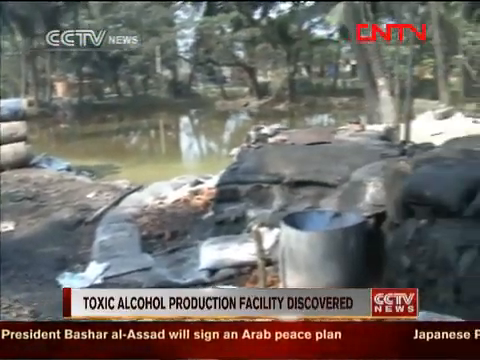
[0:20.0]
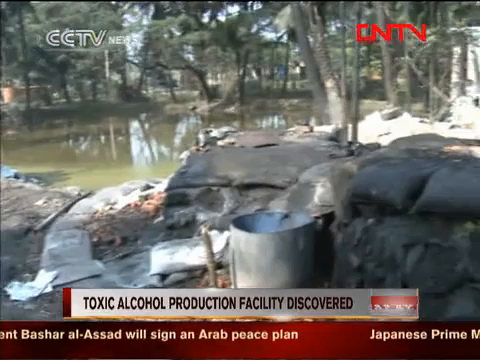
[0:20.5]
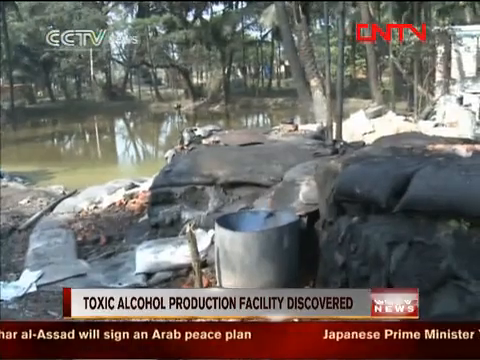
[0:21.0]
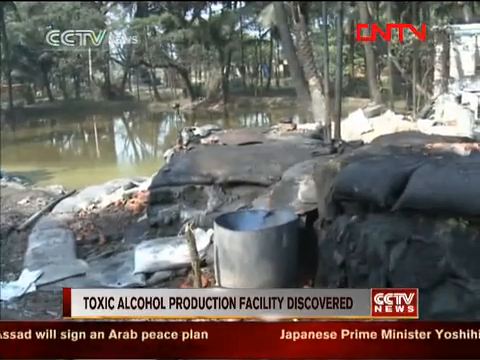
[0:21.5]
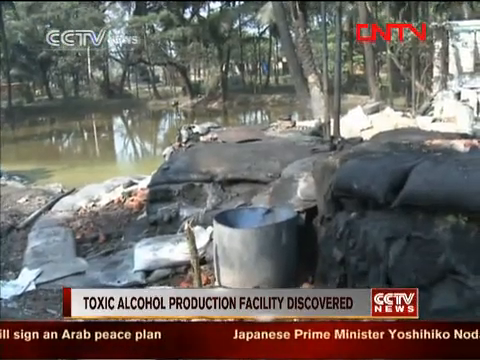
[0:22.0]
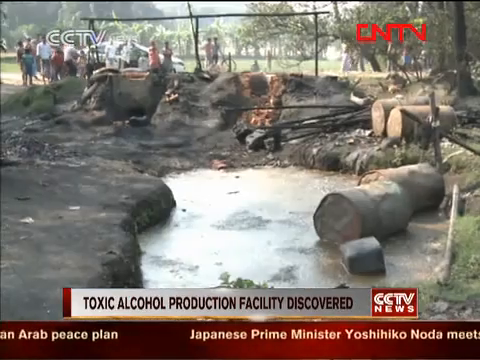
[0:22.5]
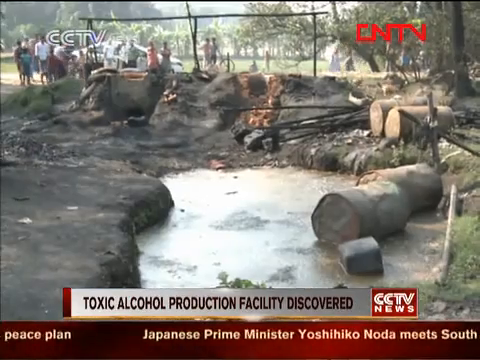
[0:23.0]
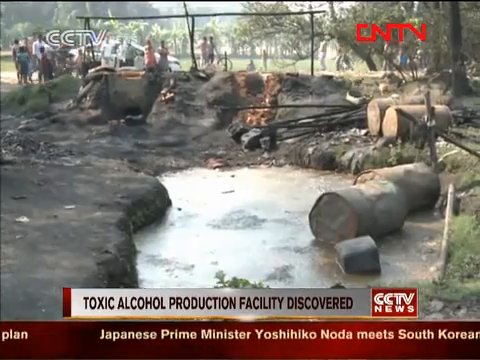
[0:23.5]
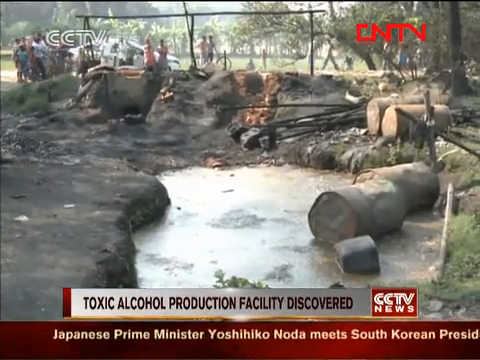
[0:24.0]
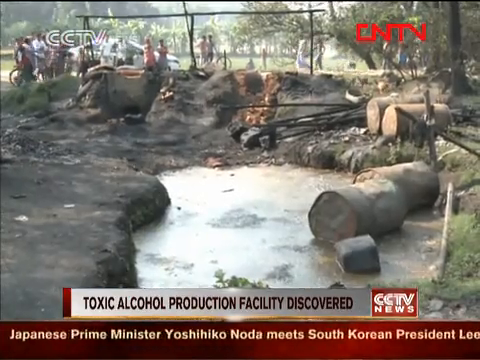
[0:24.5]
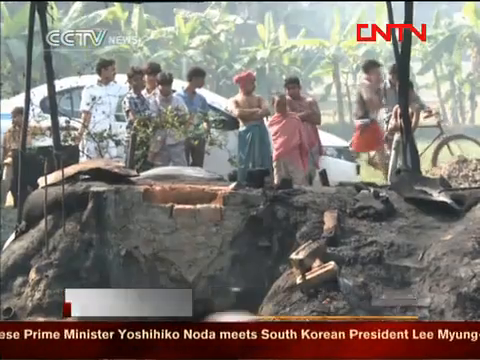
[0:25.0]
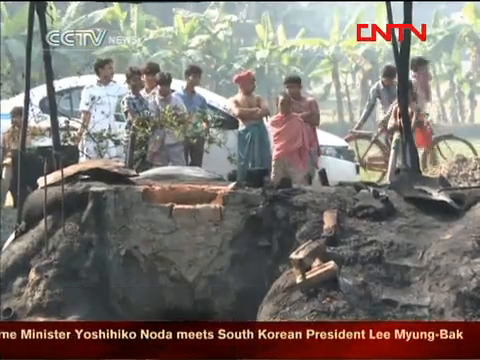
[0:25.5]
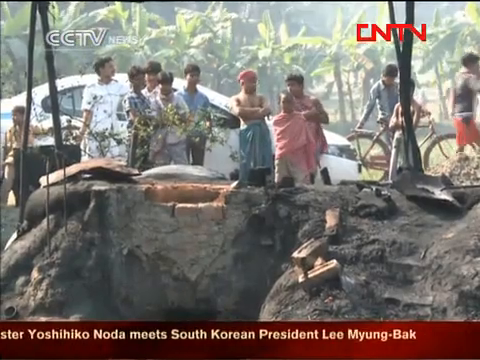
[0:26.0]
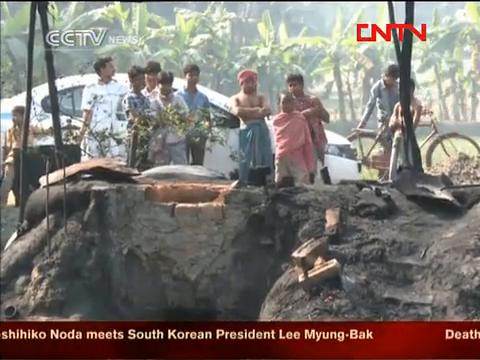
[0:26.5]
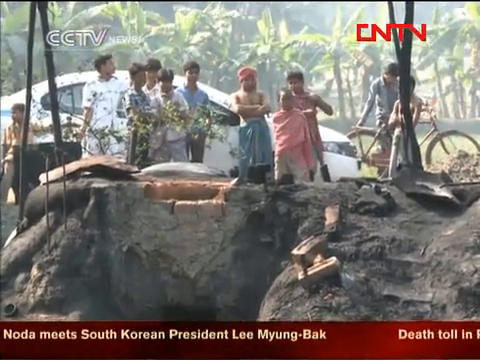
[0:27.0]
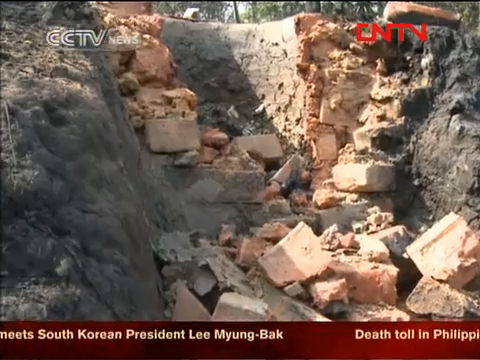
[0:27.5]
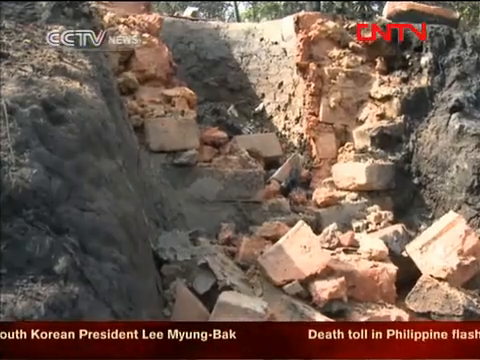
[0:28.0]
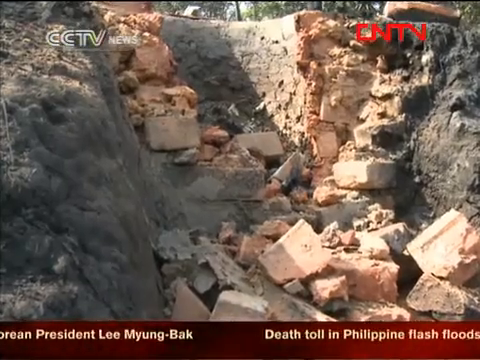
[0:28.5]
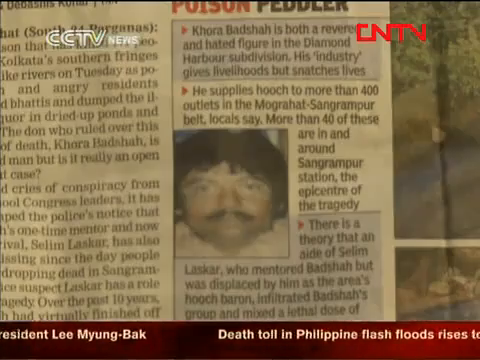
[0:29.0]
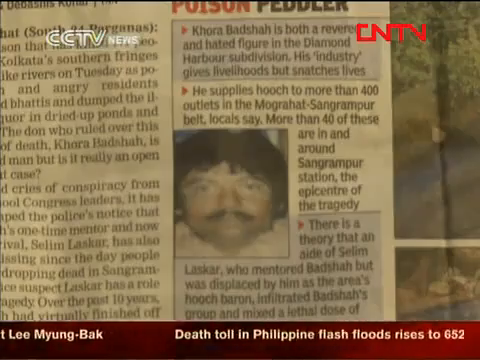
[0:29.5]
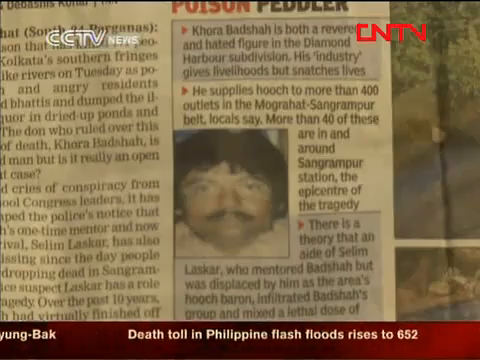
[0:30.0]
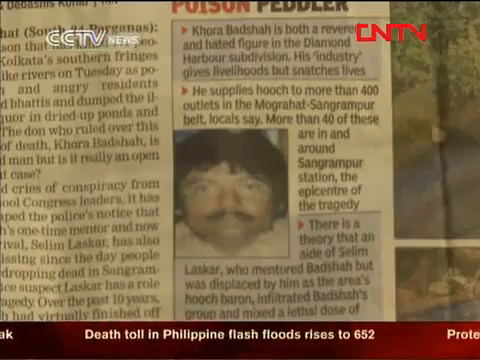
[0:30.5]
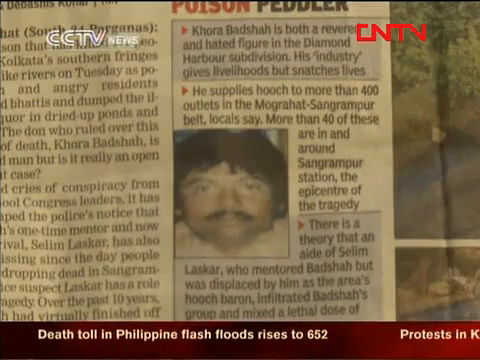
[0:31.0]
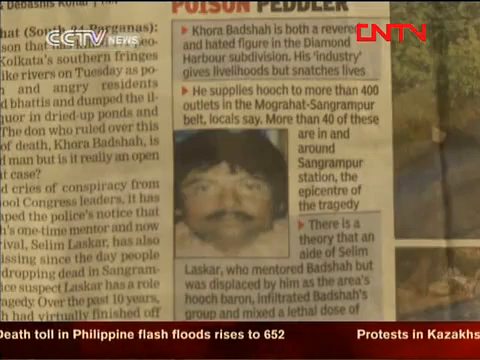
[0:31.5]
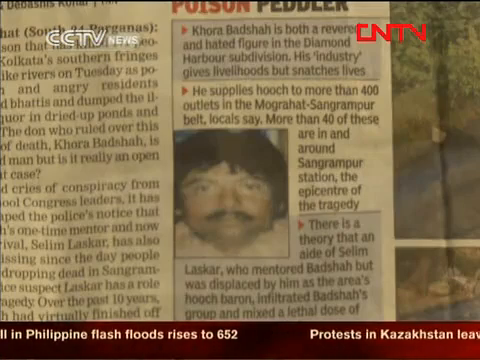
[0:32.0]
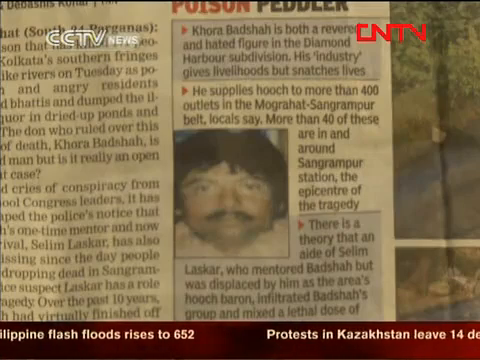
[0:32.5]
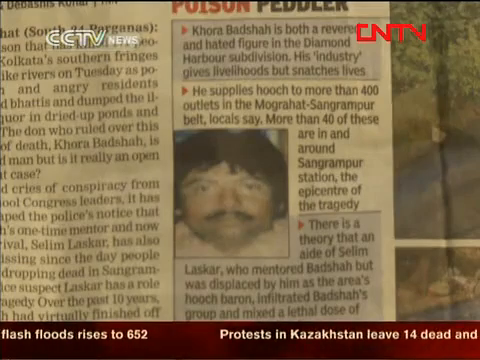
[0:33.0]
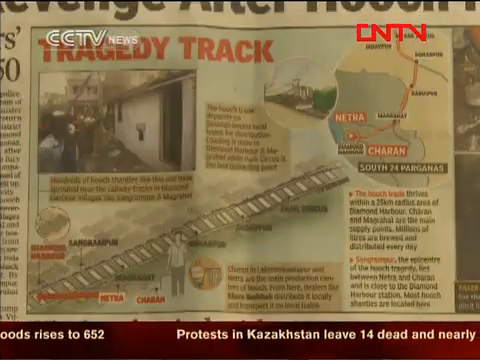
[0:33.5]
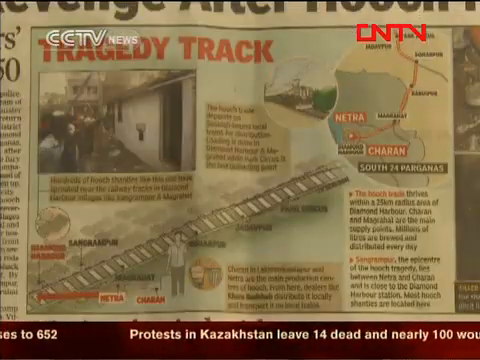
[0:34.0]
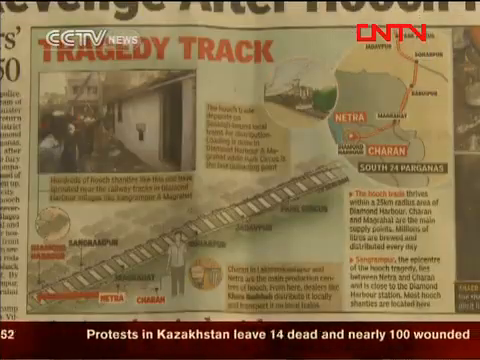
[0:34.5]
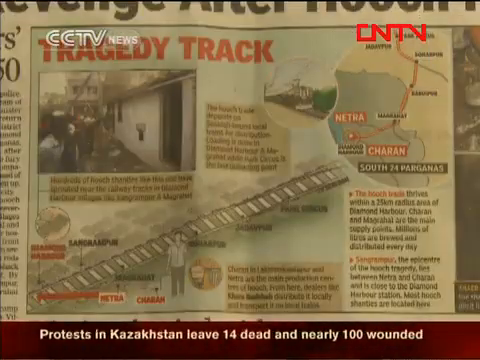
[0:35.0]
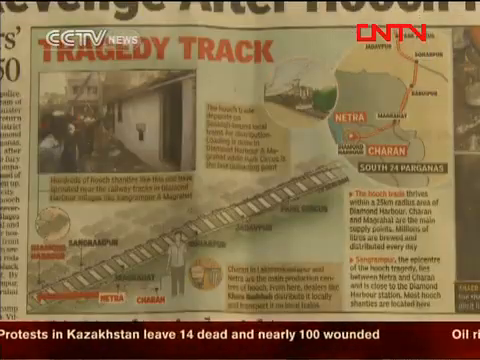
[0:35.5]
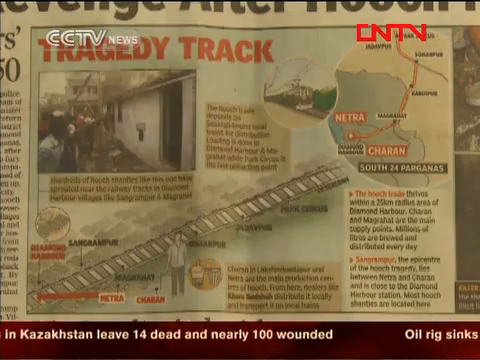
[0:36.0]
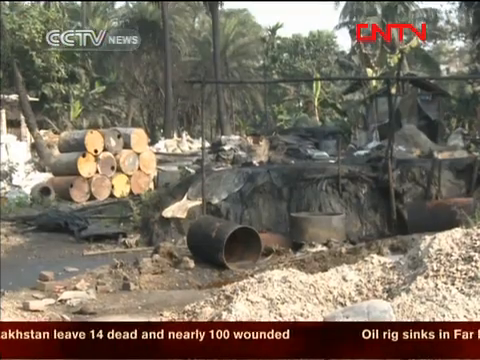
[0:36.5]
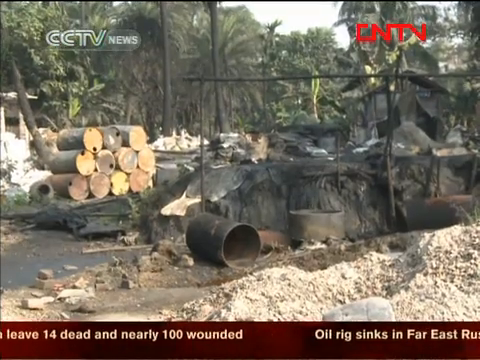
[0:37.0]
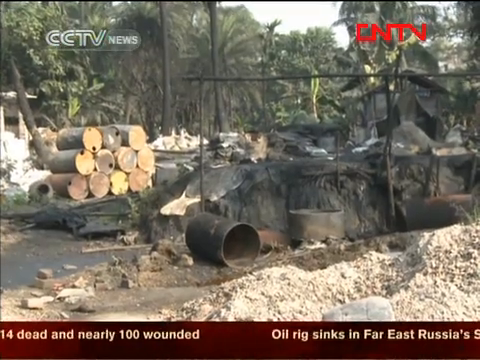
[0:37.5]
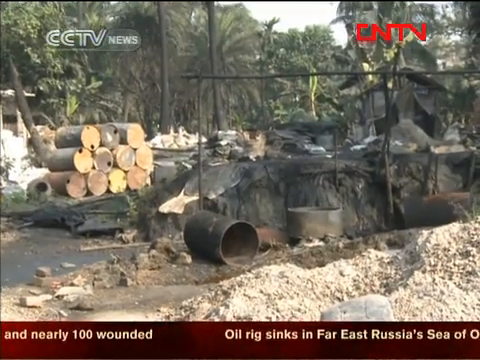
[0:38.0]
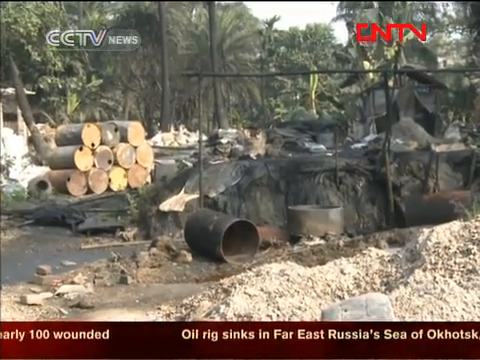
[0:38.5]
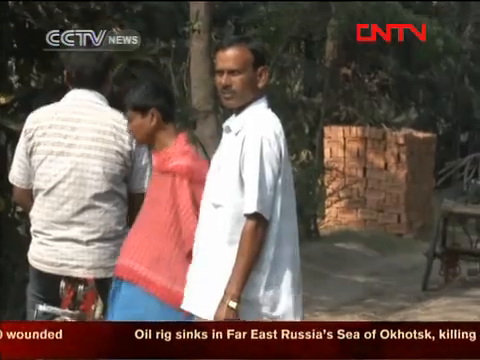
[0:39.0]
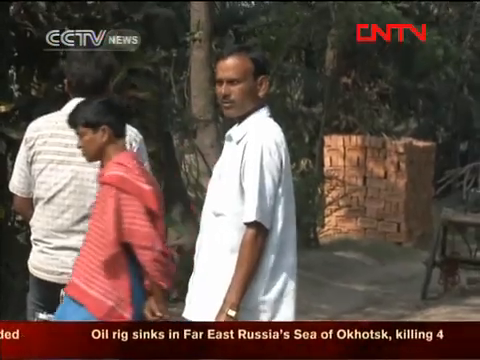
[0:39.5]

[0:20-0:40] The facility looks very unsanitary and unfit for alcohol production. A large pond full of water is surrounded by sandbags, and there are many barrels, some without lids. Another section where water used to be has dried up and is covered in mud. There are metal rods from construction sites and some logs, and people are standing about in the background, along with a white car. A close-up shows men looking at the facility; they apparently are all men. One has a bike, and one has his arms crossed as he looks down at the toxic site. Clay bricks form a makeshift construction that looks like a wall that was meant to be built; the bricks have crumbled and fallen into a ravine. A close-up of an article follows. It is about a man named Cora Badashah, described as both a revered and hated figure in the Diamond Harbor Division, who supplies HOOCH to more than 400 outlets in the area, more than 40 of them in and around San Graham Poor Station, the epicenter of the tragedy. A picture of him appears. There is also a map of the tragedy track showing where it happened, a building in the area, tags about the timeline, a sketch of a railroad track, and many boxes about important points and places in the story, which are too small and blurry to read.